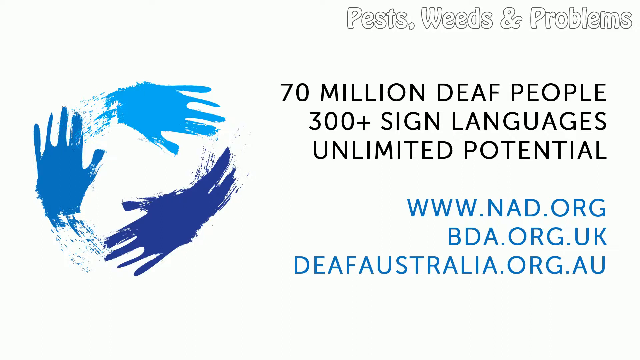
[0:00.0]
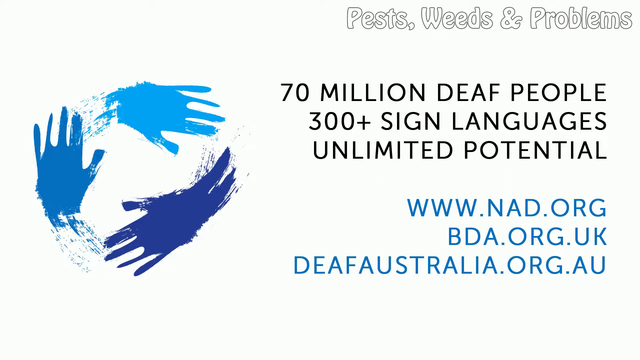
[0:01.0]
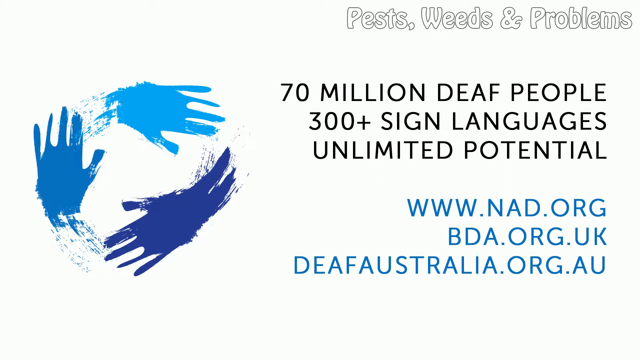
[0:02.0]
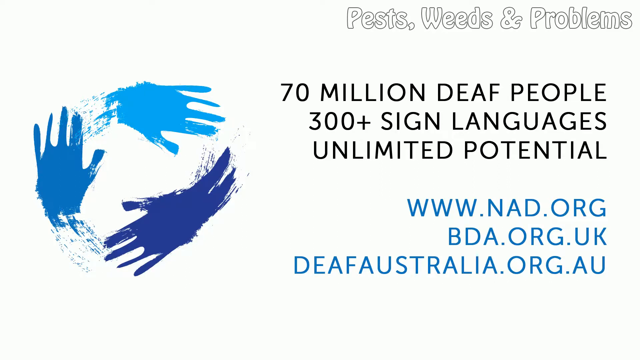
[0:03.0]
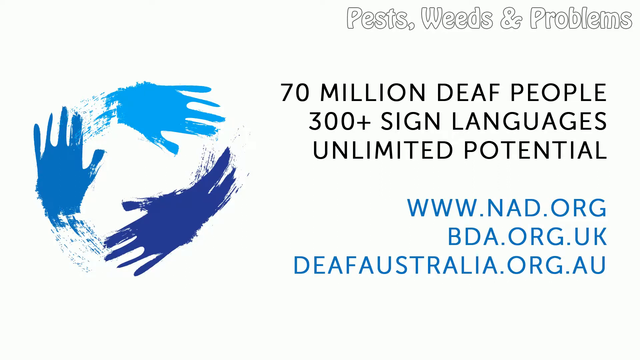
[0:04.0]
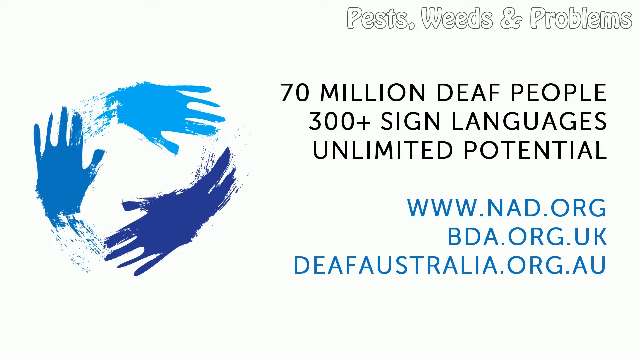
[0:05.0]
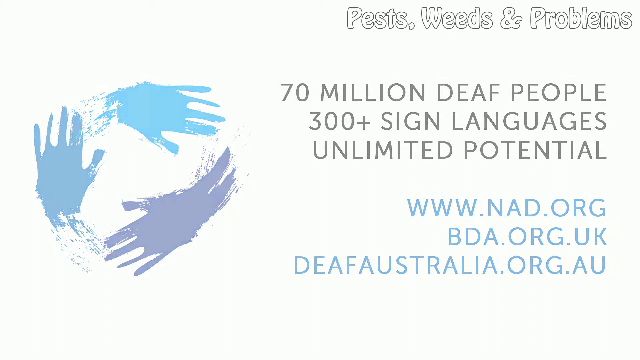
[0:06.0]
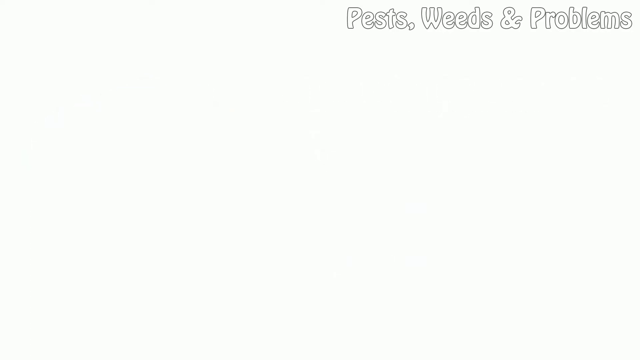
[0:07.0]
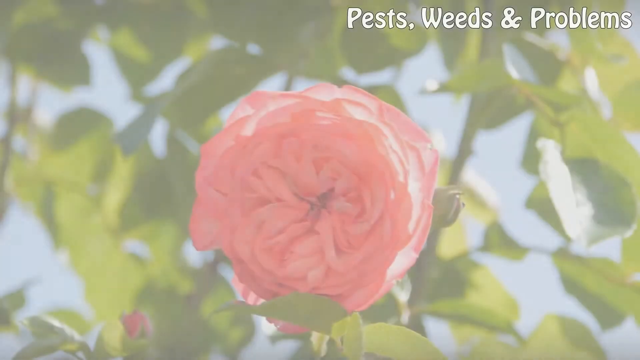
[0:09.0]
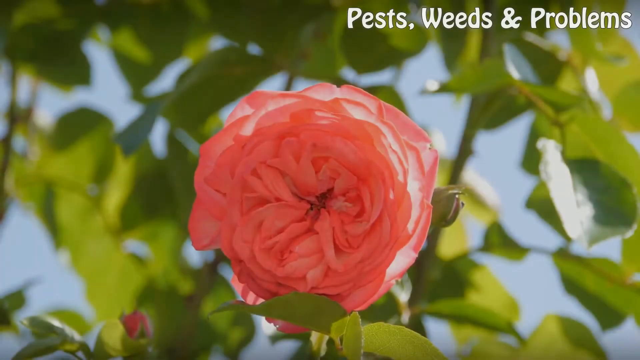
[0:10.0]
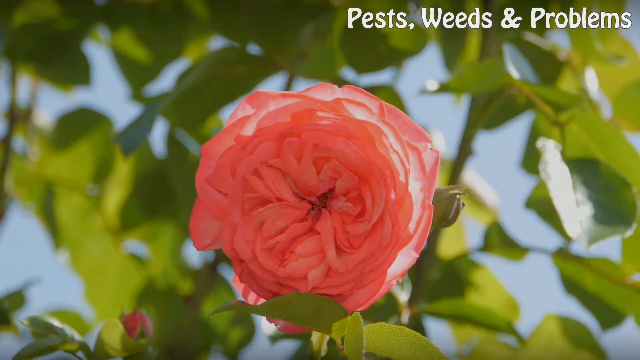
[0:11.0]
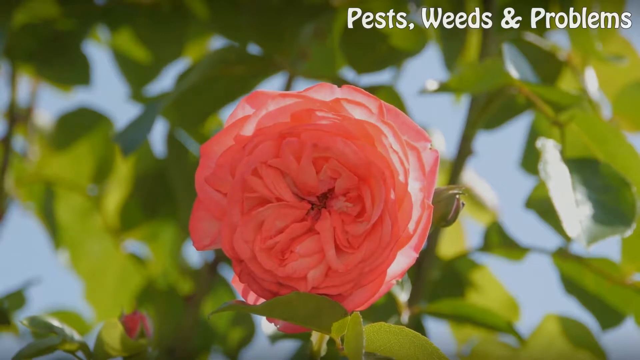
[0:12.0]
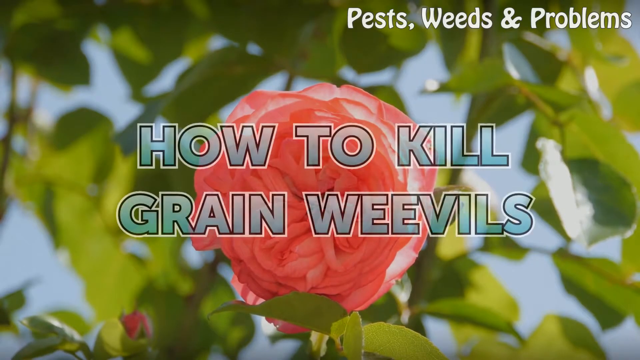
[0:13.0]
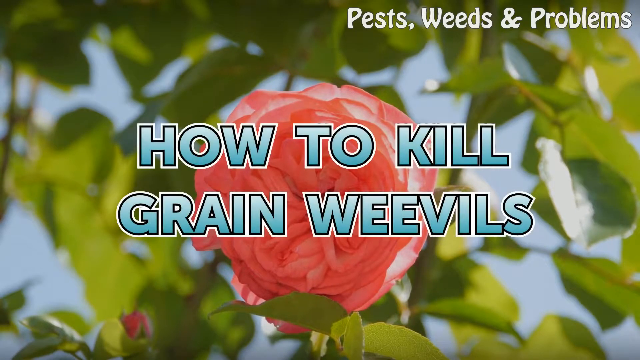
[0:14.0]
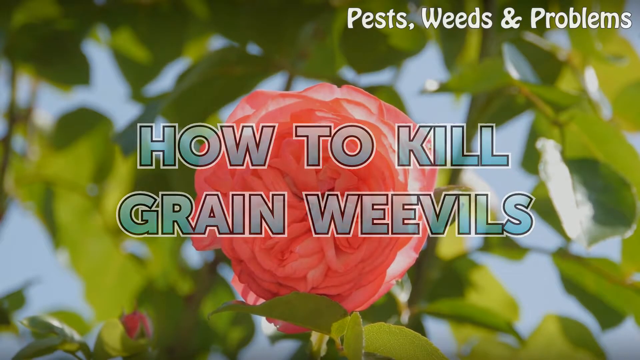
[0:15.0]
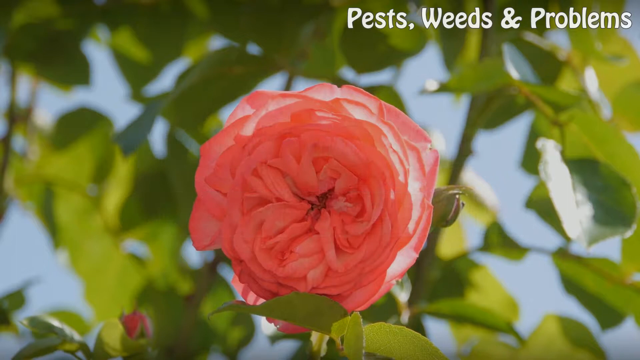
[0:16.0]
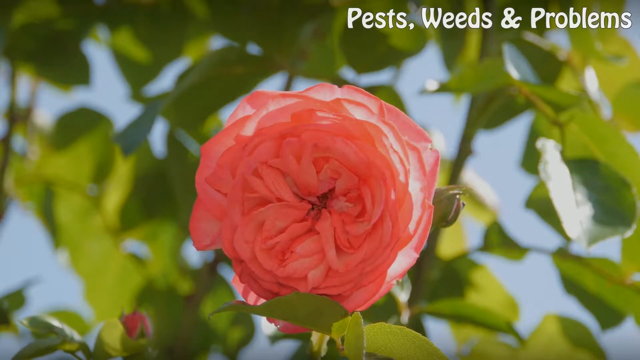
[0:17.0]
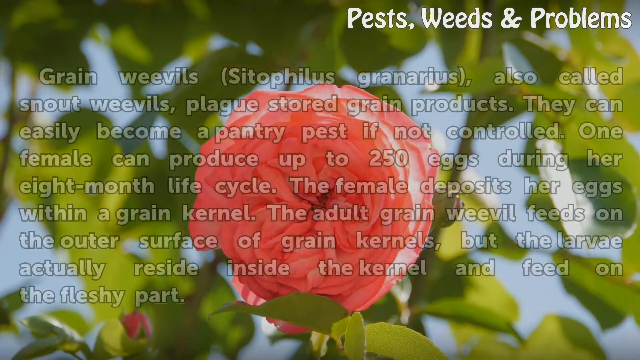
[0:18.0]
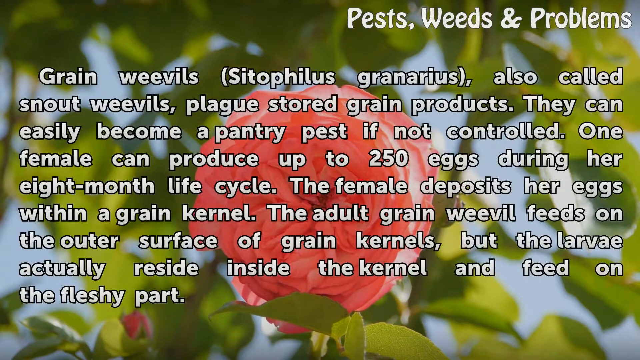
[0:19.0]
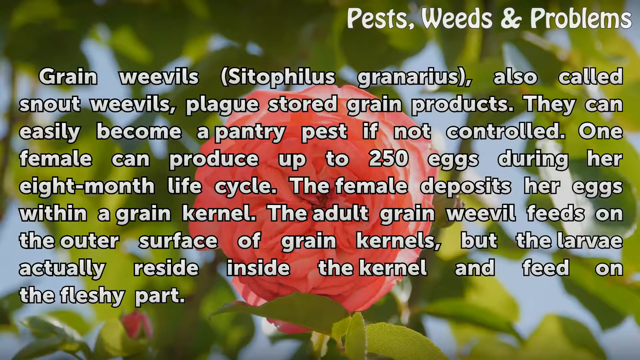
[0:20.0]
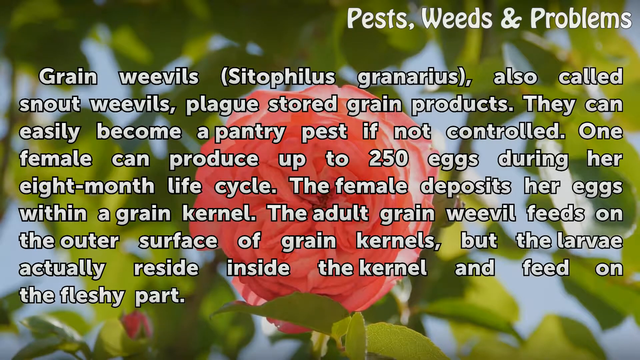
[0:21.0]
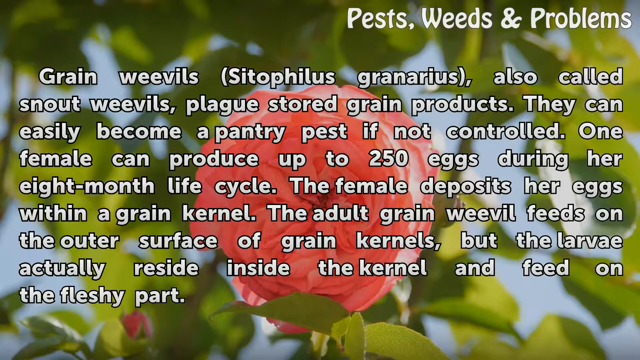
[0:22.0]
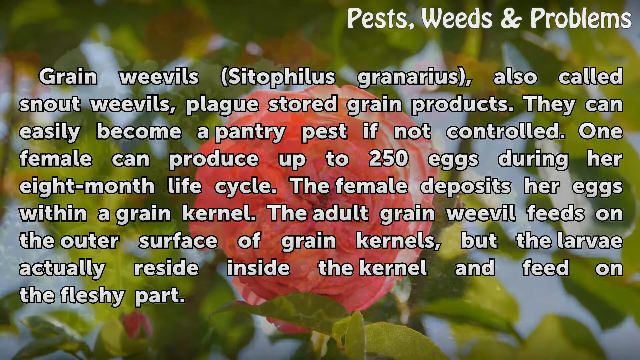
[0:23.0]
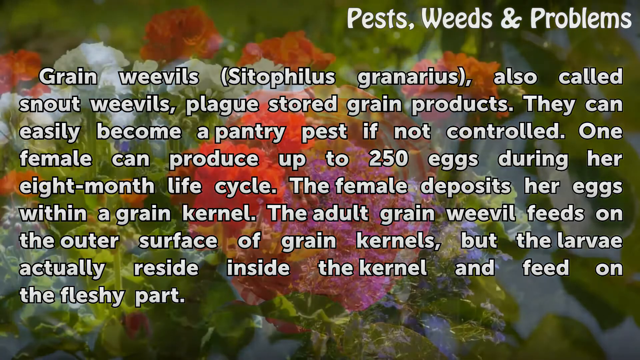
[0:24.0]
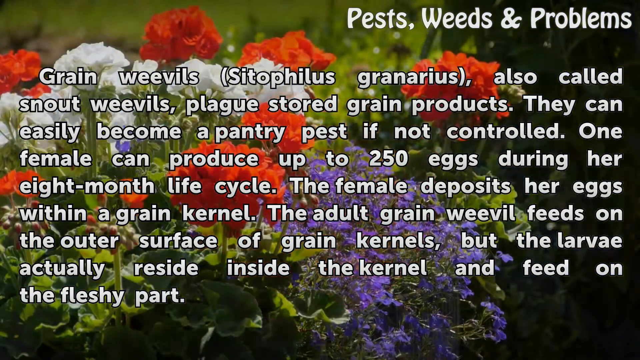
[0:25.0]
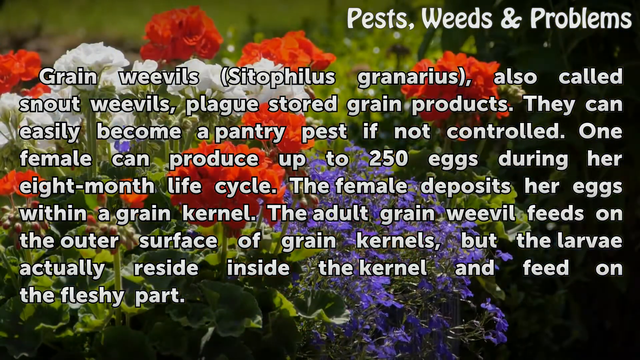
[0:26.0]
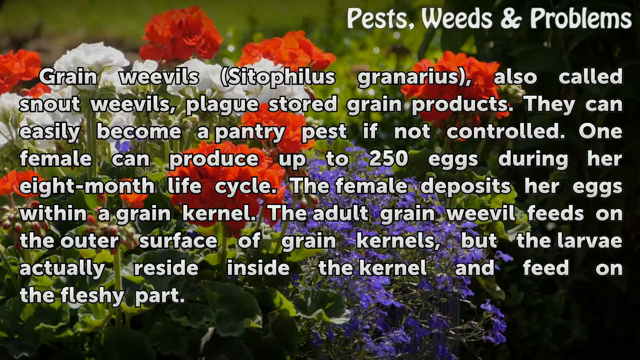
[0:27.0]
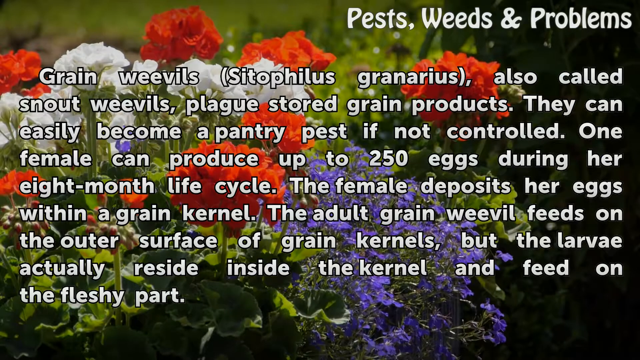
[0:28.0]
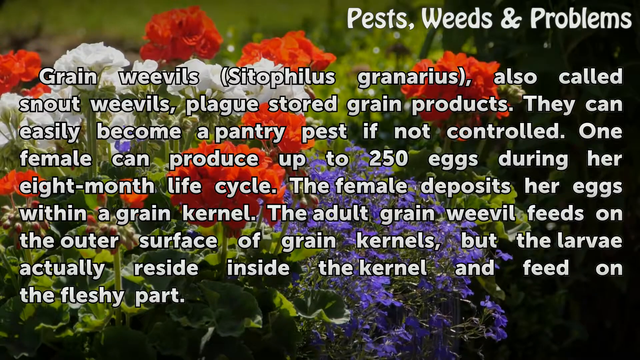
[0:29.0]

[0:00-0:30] The video opens on an image of two blue hands and a purple hand on the left side of the screen, forming a circle that seems to be turning counterclockwise. At the top right of the screen is the text "pests, weeds, and problems". Beneath it, text reads "70 million deaf people, 300-plus sign languages, unlimited potential", followed by three web addresses: NAD.org, BDA.org and DeafAustralia.org. This scene stays up for only a second before changing to flowers and natural plants blowing in the wind, with "how to kill grain weevils" across the screen. The next scene shows a description of grain weevils, stating that they are called "snout weevils", that they plague stored grain products, and that they "can easily become a pantry pest if not controlled". It adds that "one female can produce up to 250 eggs during her eight-month life cycle" and that the female deposits her eggs within one kernel of grain.